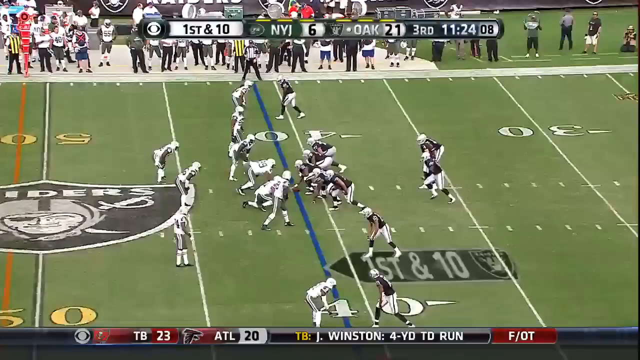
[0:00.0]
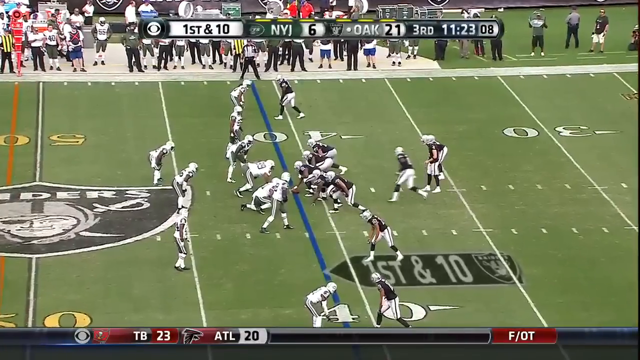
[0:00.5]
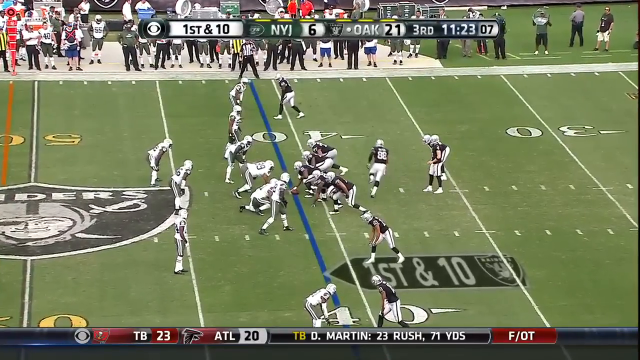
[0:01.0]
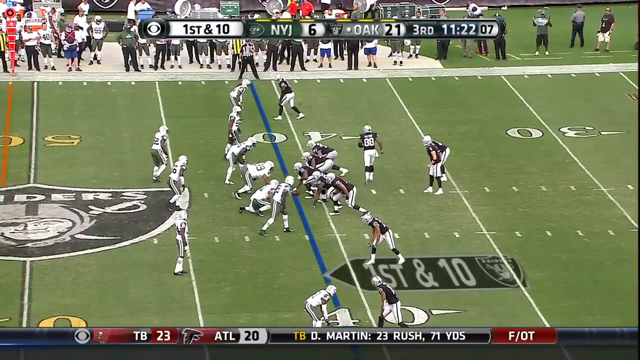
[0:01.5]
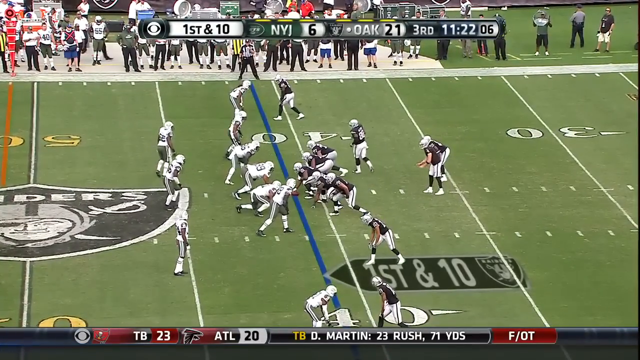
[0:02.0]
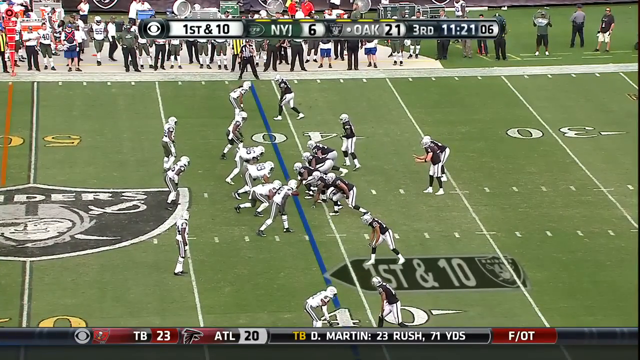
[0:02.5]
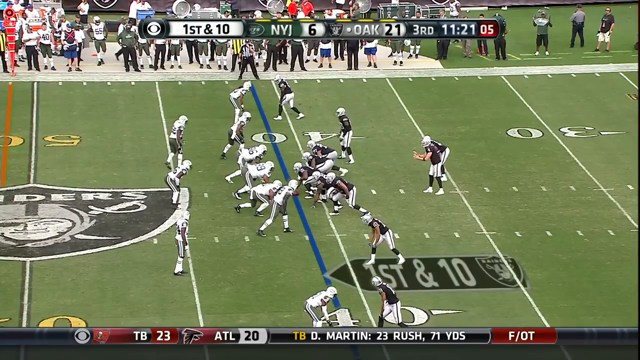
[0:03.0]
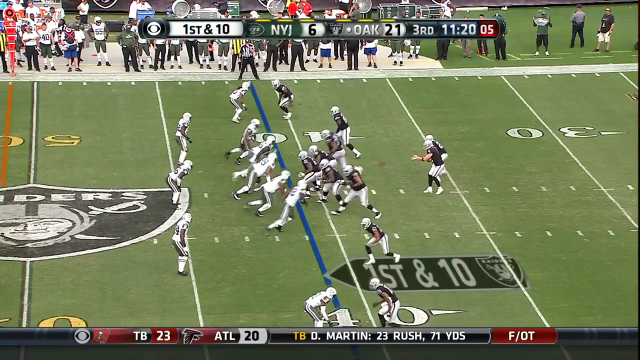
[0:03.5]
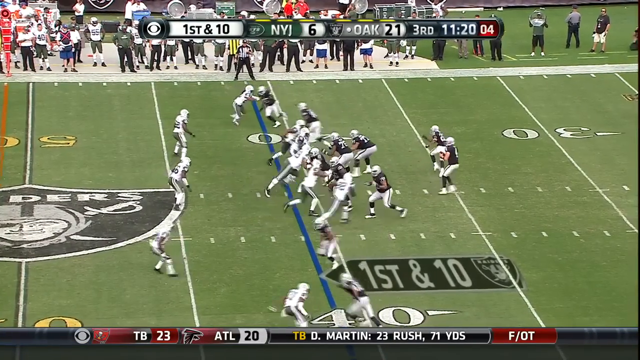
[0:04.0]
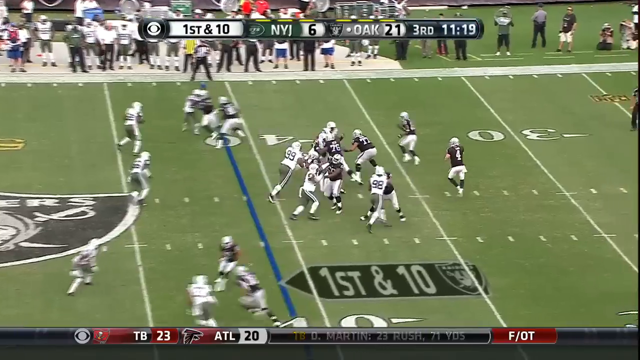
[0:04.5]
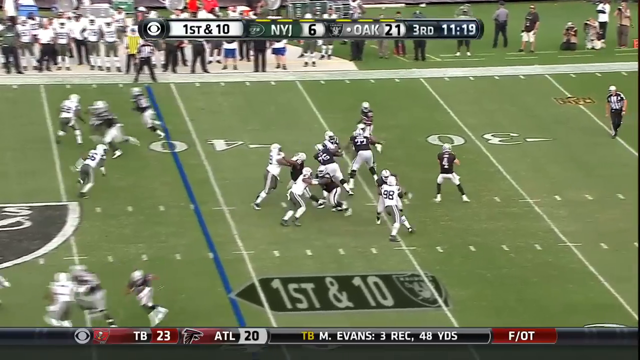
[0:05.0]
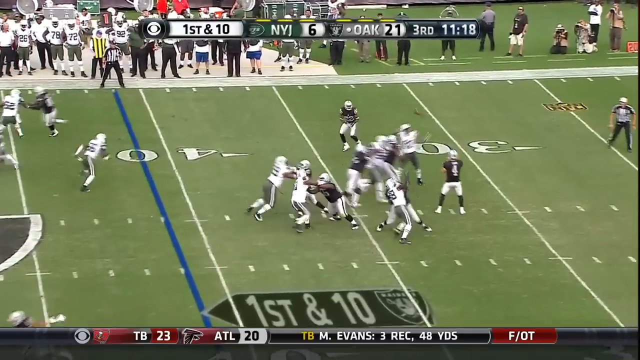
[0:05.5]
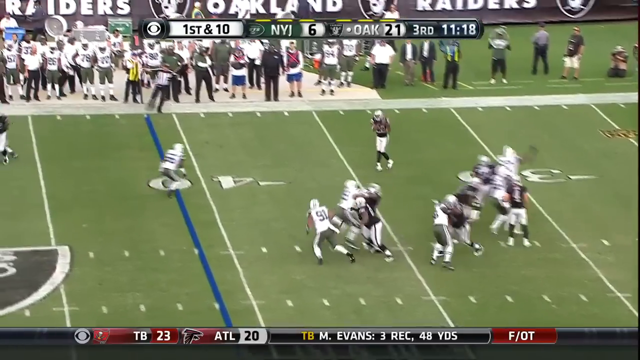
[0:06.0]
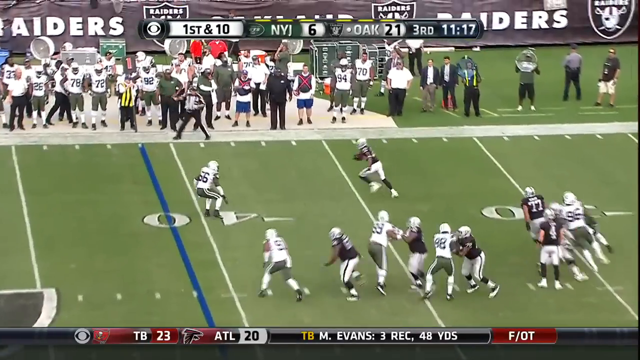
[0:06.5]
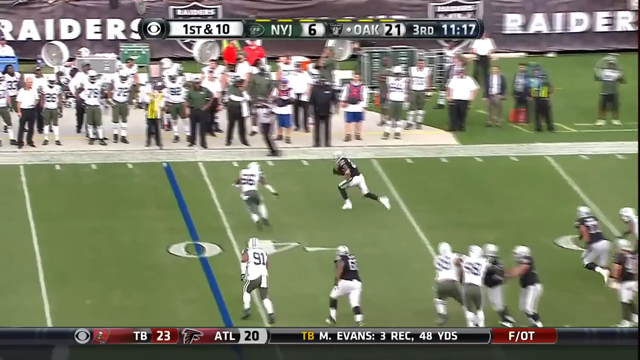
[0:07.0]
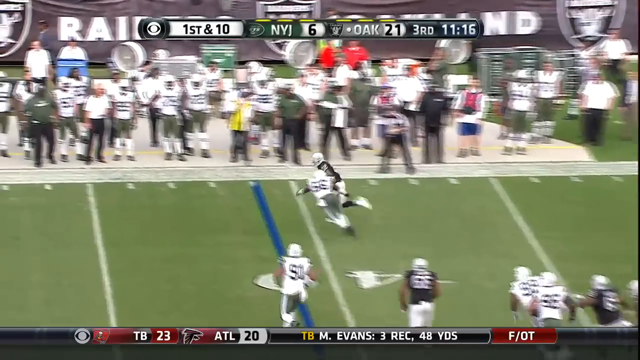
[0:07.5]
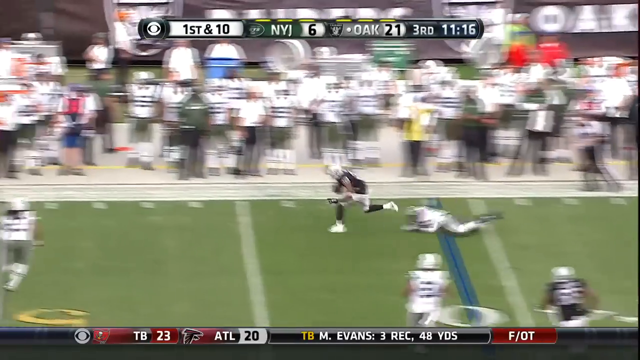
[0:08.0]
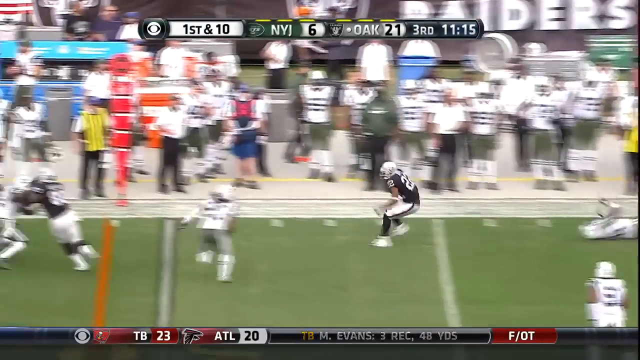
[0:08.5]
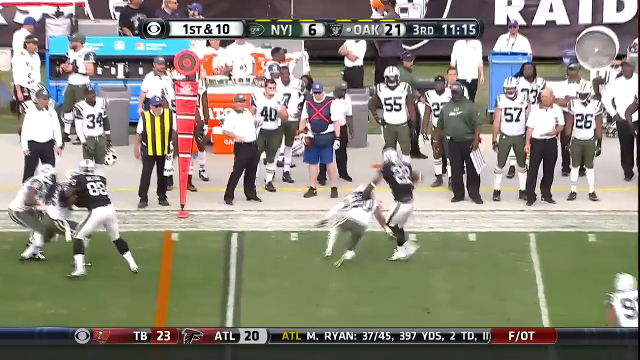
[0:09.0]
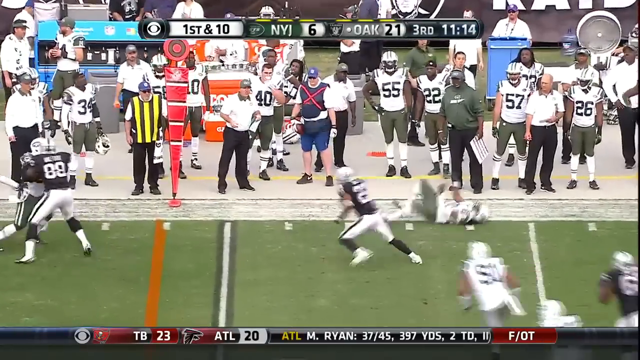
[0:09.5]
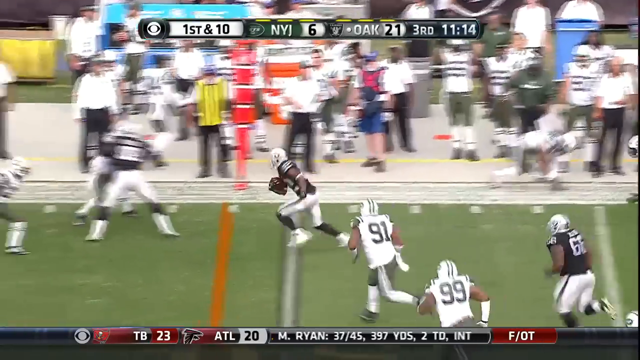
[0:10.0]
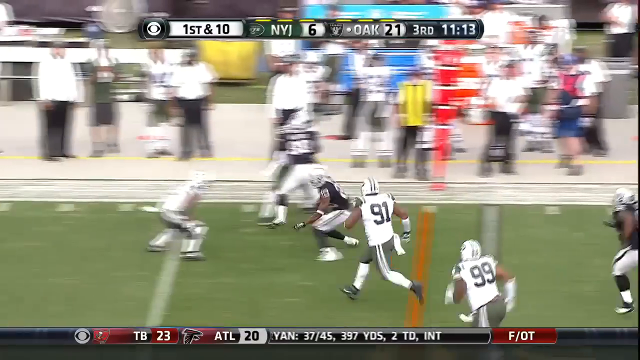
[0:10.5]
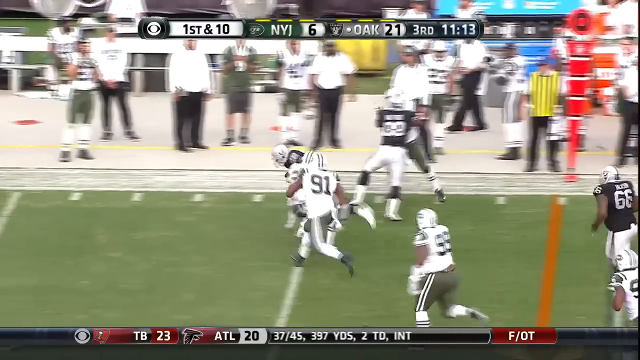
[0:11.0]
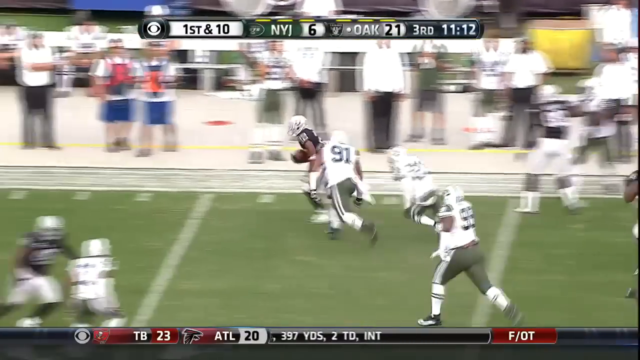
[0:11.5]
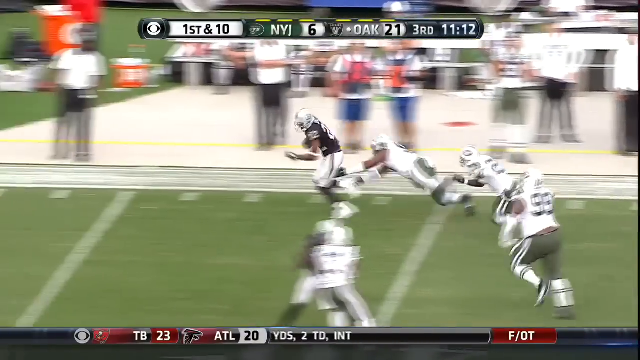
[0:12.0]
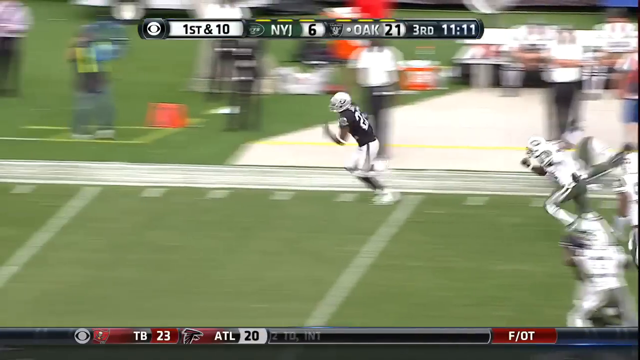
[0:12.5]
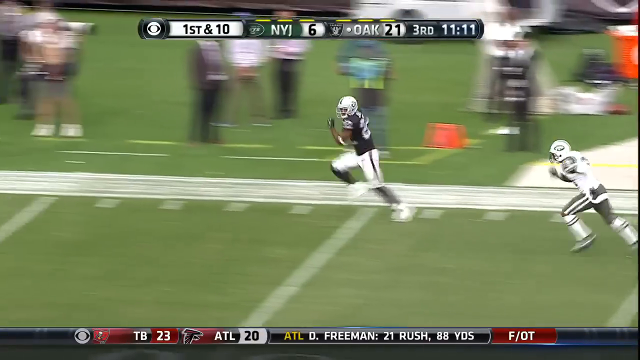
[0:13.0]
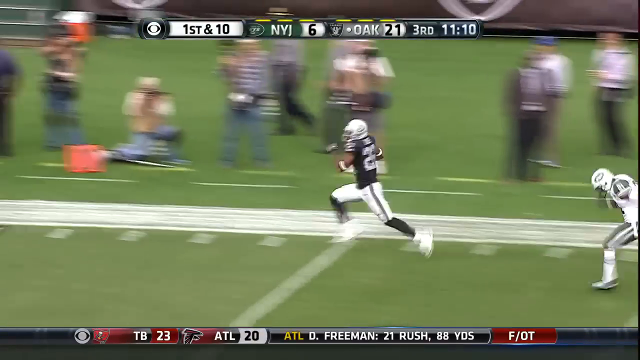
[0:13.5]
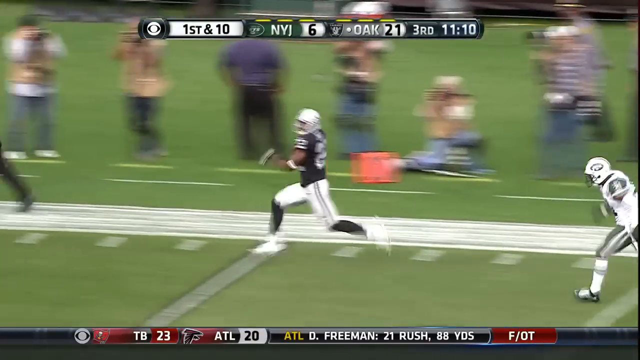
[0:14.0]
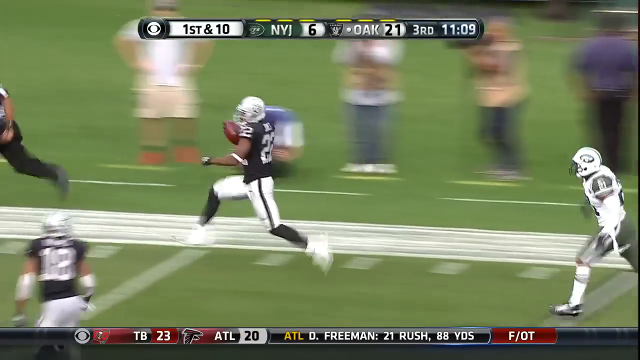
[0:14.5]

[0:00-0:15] The Jets play the Raiders in a football game. The Raiders are at the 40-yard line on their side of the field. Carr, number four, throws the ball to number 22, apparently Taiwan Jones. Jones runs with it, stops as a defender flies by him, and then puts another defender, apparently number 20, into the ground. He passes another defender, number 21, and a big defensive lineman tries to tackle him, but Jones goes all the way to the end zone, galloping like a horse into it.